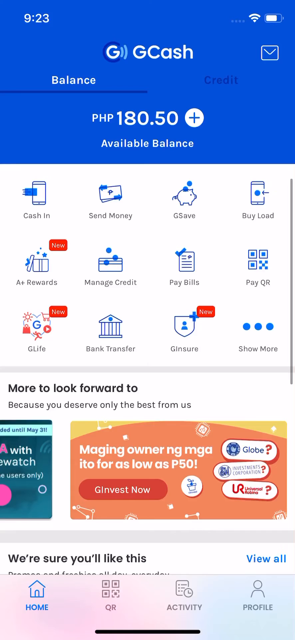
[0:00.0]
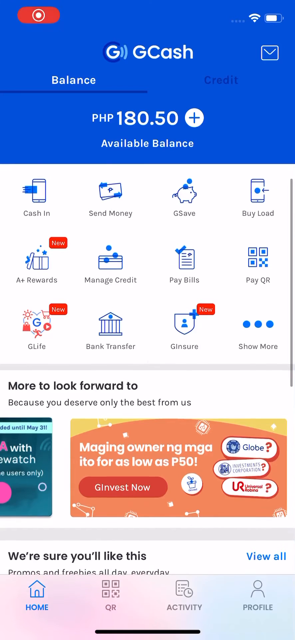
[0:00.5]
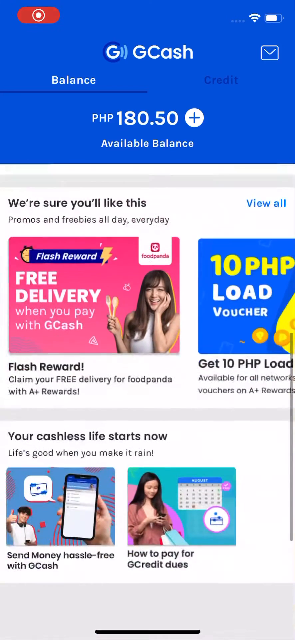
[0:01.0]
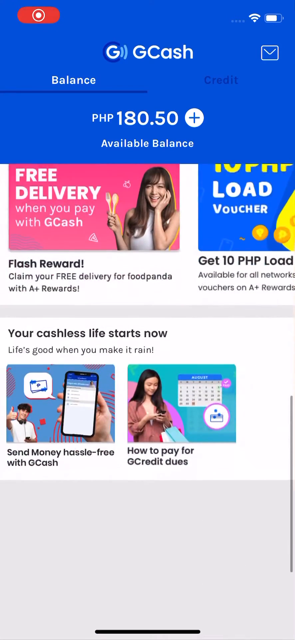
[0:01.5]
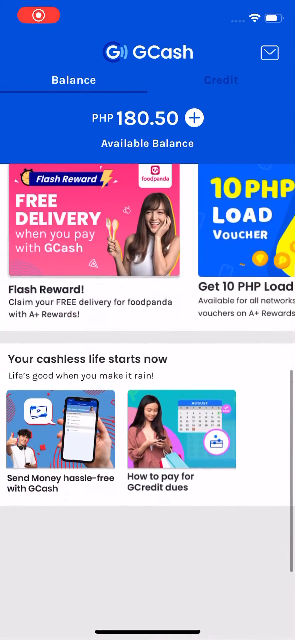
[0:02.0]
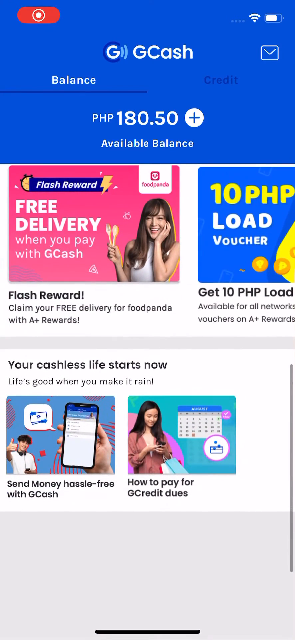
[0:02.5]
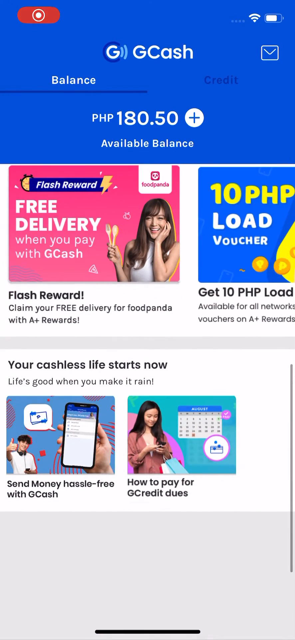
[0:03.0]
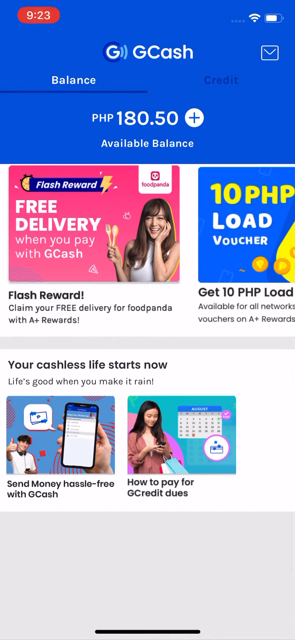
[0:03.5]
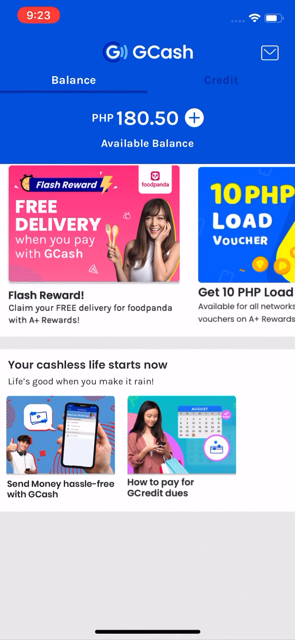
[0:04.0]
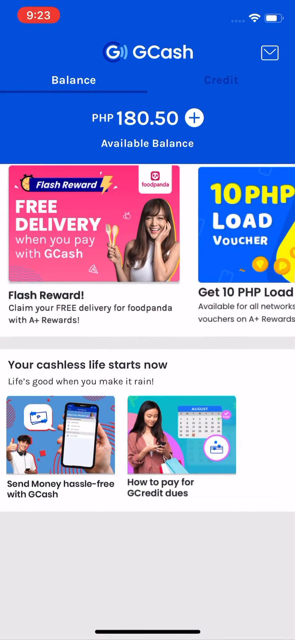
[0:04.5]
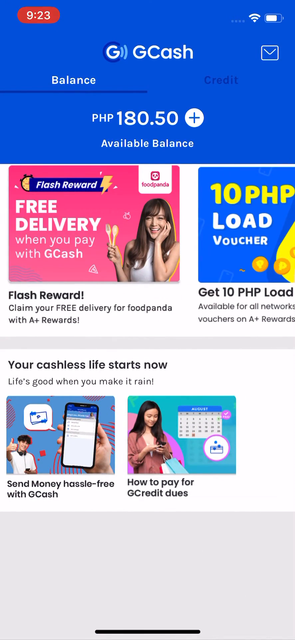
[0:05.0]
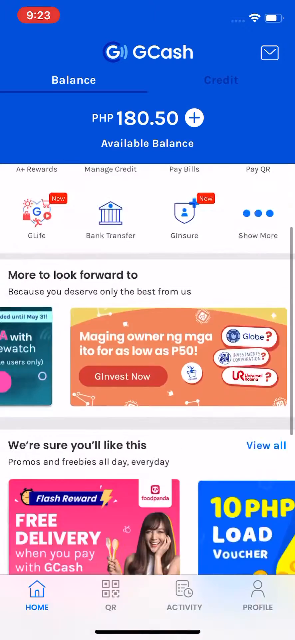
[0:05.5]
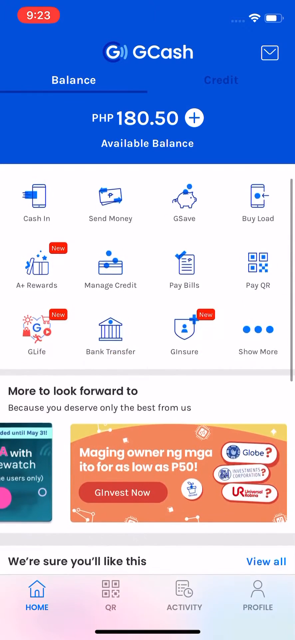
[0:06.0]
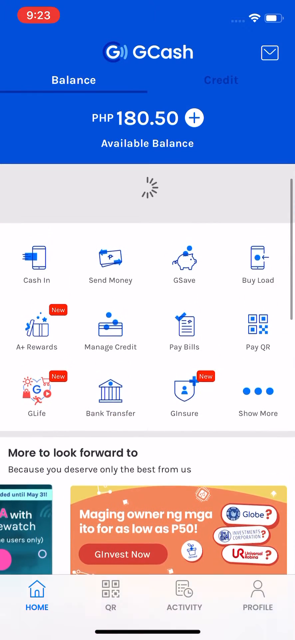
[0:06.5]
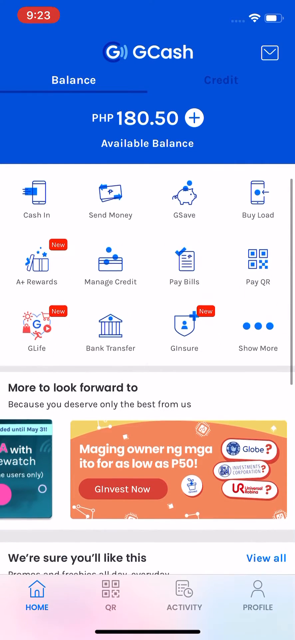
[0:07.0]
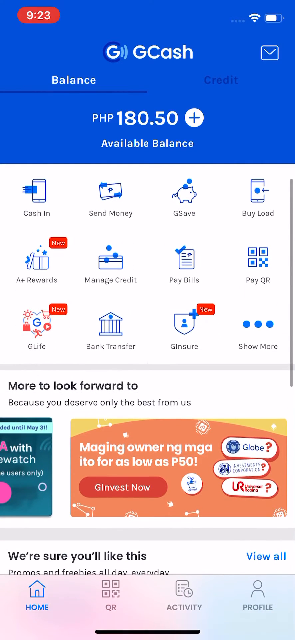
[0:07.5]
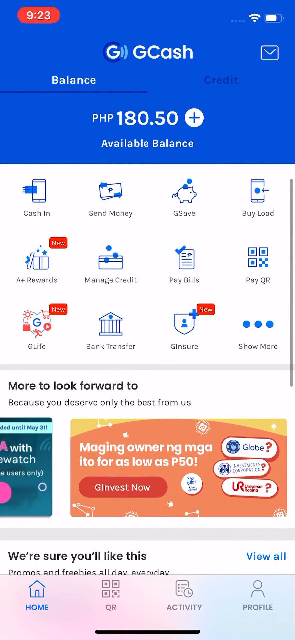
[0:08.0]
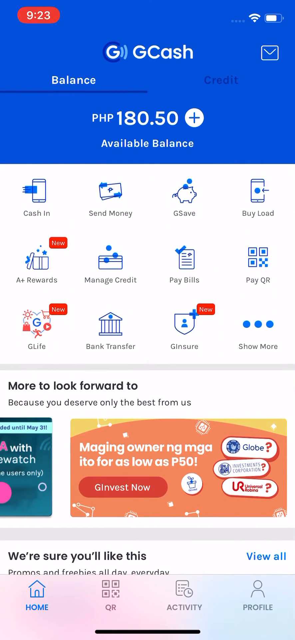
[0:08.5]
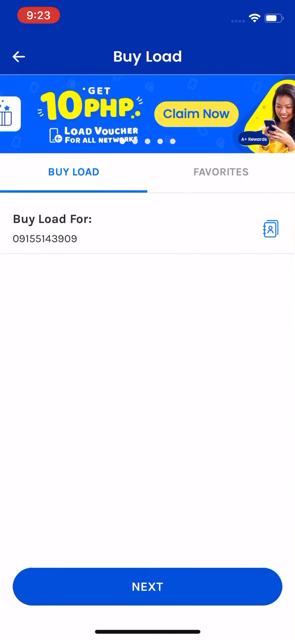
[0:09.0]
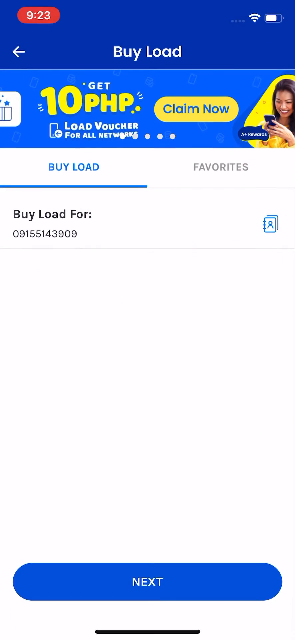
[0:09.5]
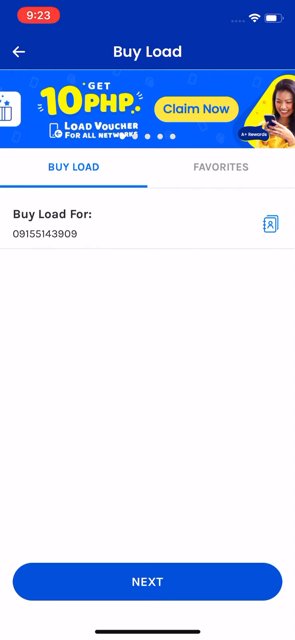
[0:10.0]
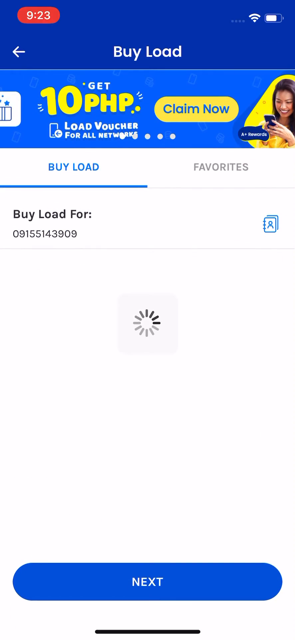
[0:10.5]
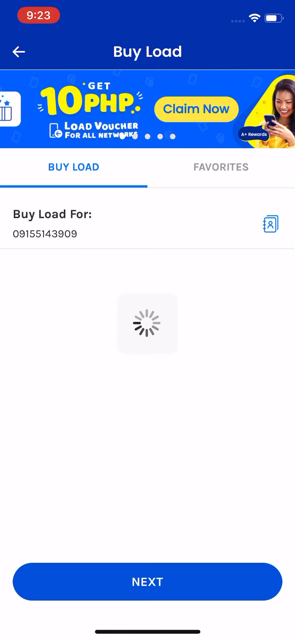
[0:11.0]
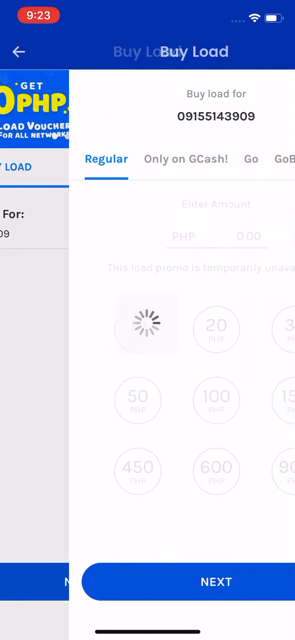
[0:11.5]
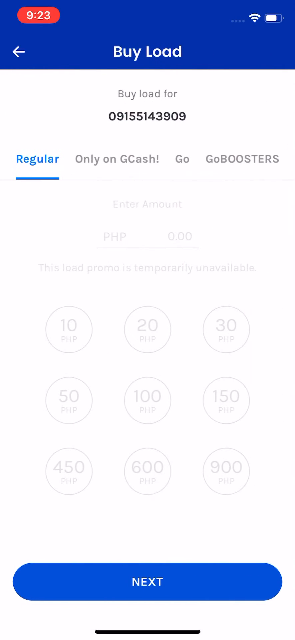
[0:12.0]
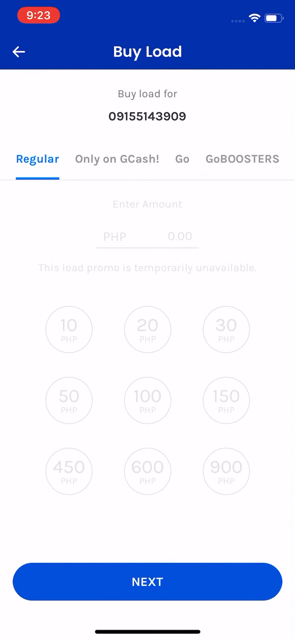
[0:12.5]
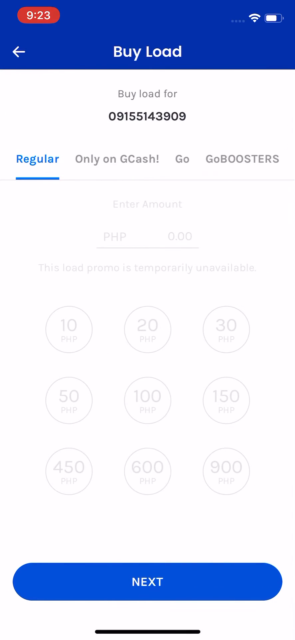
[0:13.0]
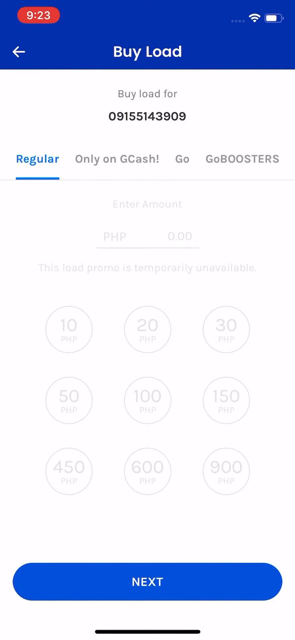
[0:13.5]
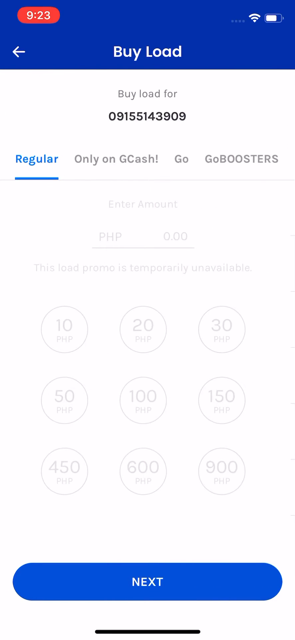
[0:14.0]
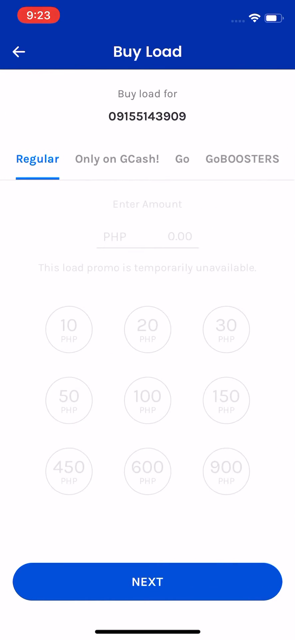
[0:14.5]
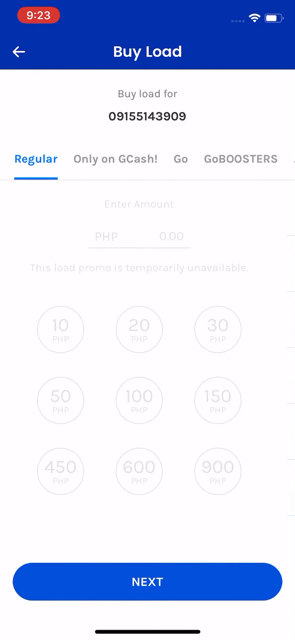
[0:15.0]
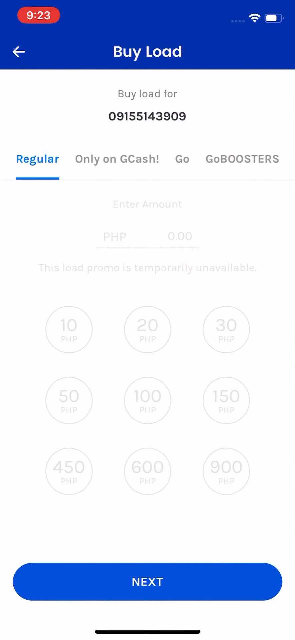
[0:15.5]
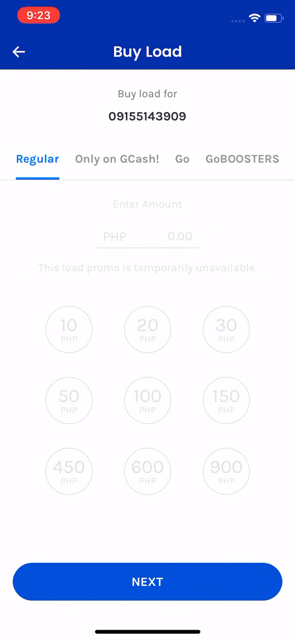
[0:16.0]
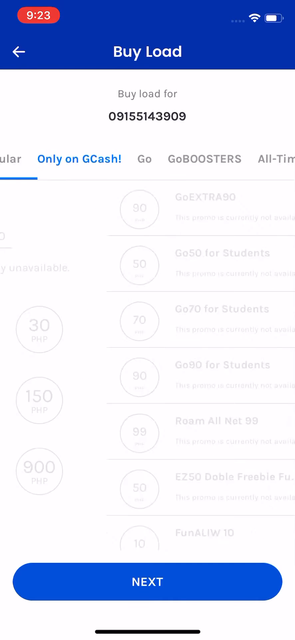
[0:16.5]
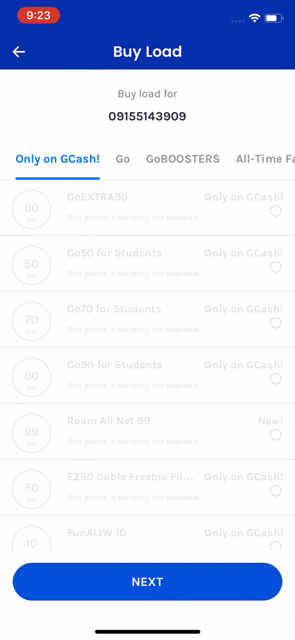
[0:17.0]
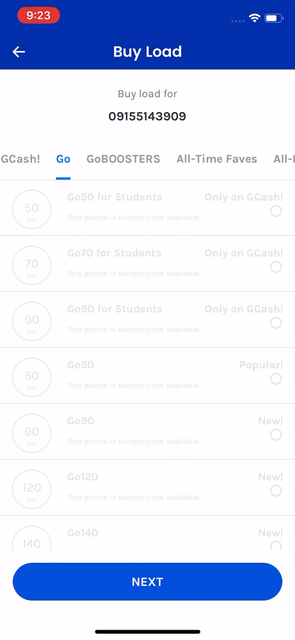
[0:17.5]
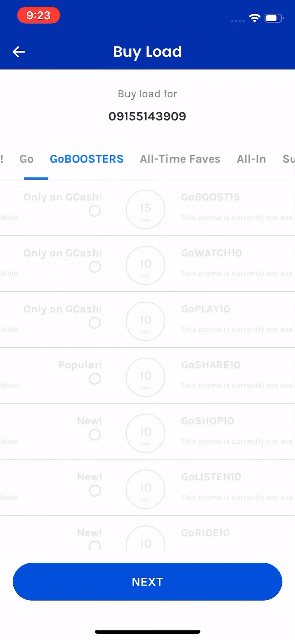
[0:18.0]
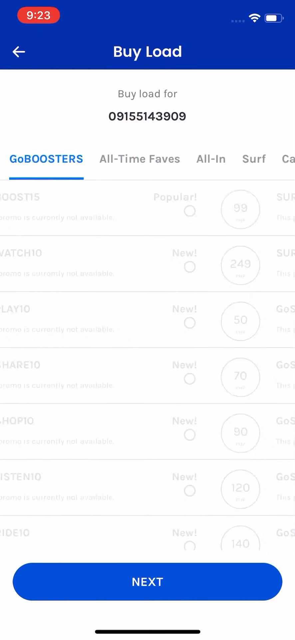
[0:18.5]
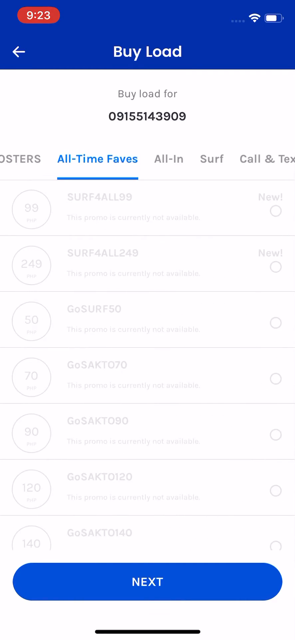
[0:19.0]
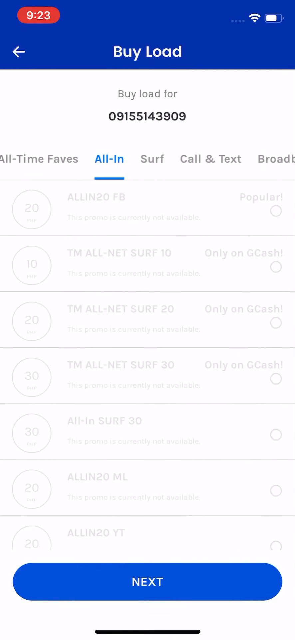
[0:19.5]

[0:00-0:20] The video appears to be a screenshot of someone's phone, a long, tall vertical video, and the person seems to be using an app called GCash. At the very top the time is shown in red, which suggests they are recording, and at the top right are the Wi-Fi and battery symbols. There are tabs: a balance tab, which is currently open, and a credit tab. The balance reads 180.50 PHP. Below are some advertisements, such as a flash reward, and text saying "your cashless life starts now." The person scrolls around the app. At the top, right below the balance, is a three-by-four grid of options, including cash in, send money, G-Save, pay bills and pay QR. The video quality is poor, making the text somewhat hard to read. The person taps buy load, which lets you buy load for a particular person; a number pops up, and there are options such as regular, only on GCash, and GoBoosters.